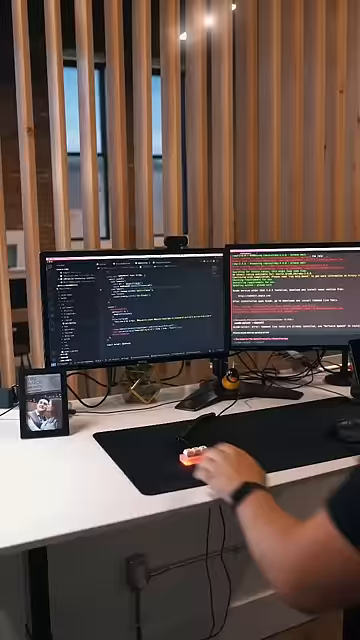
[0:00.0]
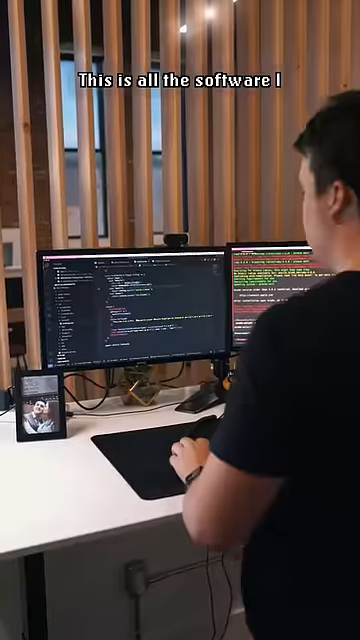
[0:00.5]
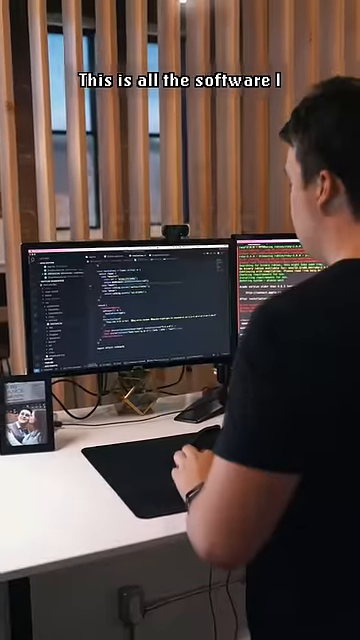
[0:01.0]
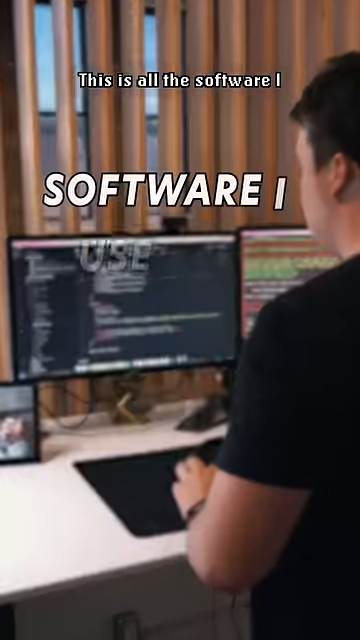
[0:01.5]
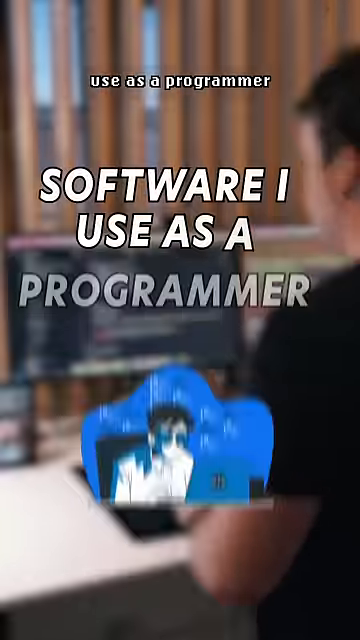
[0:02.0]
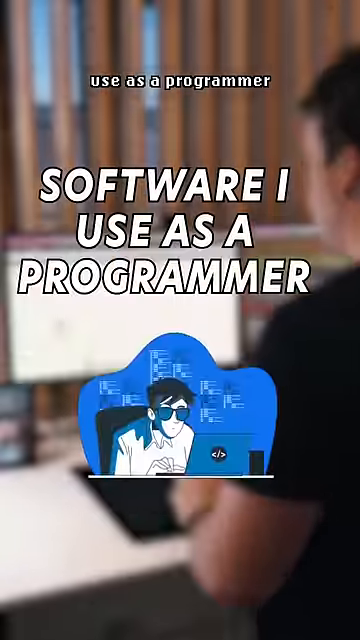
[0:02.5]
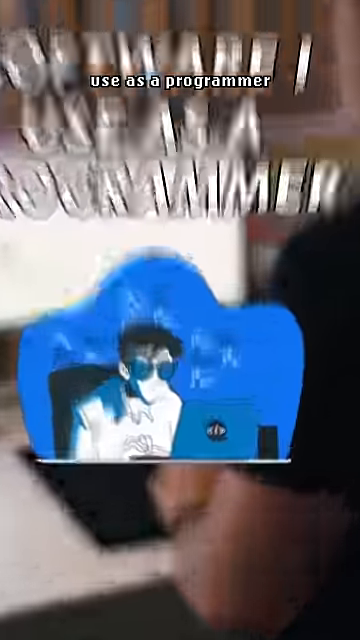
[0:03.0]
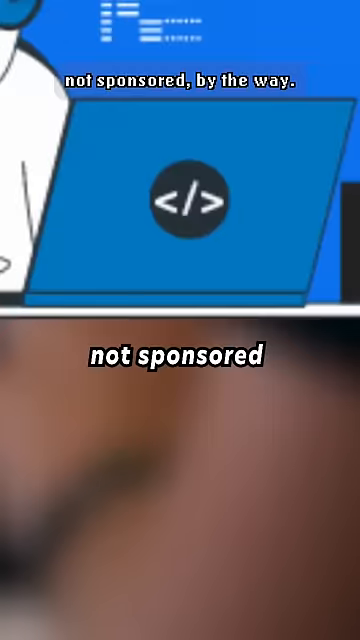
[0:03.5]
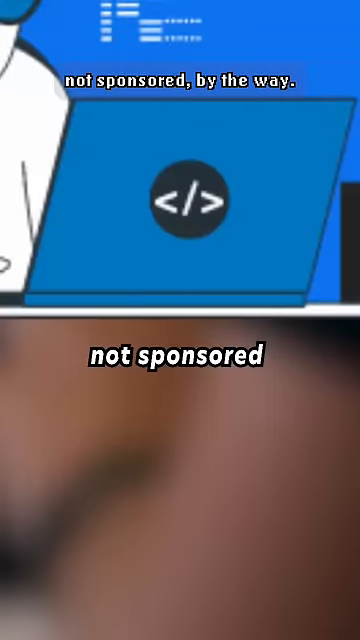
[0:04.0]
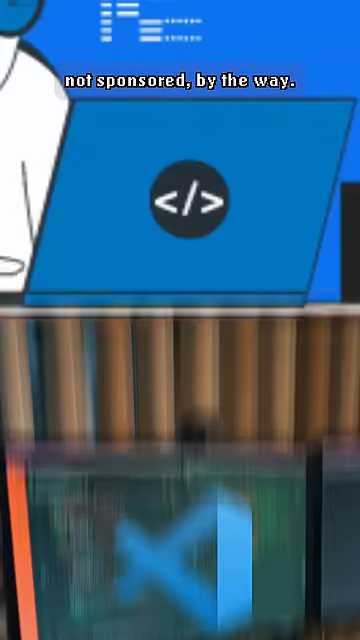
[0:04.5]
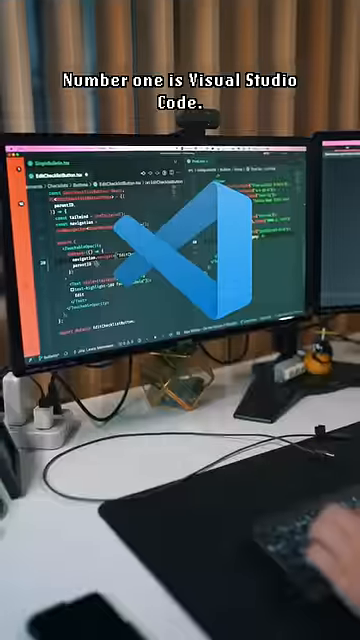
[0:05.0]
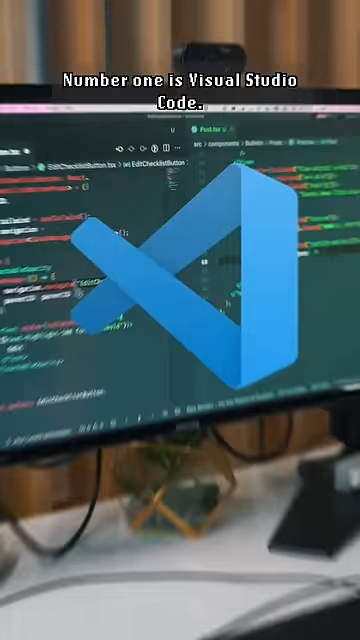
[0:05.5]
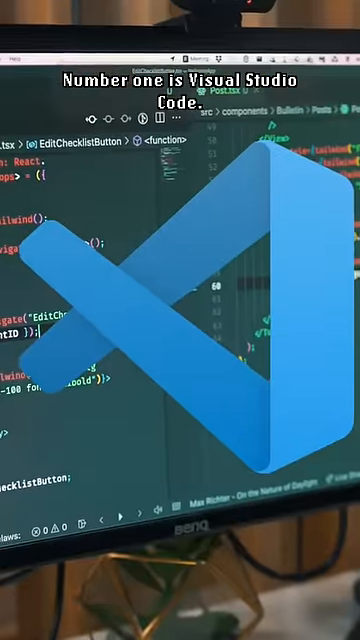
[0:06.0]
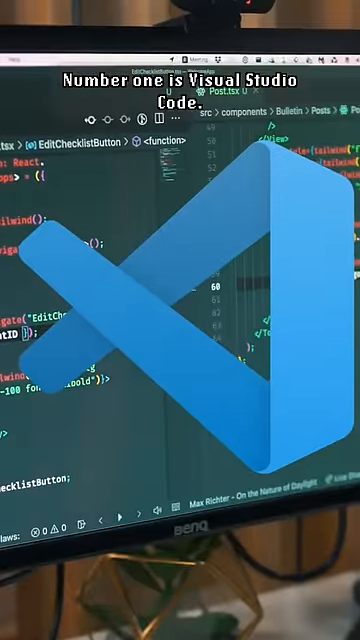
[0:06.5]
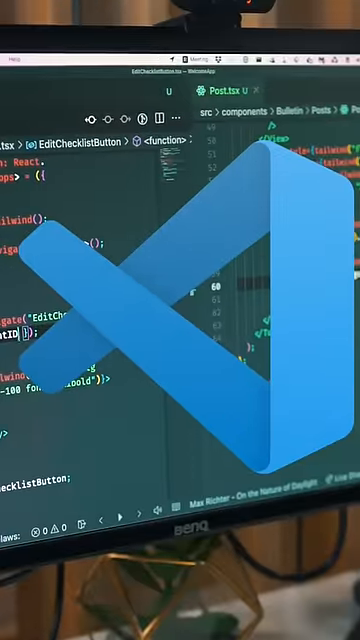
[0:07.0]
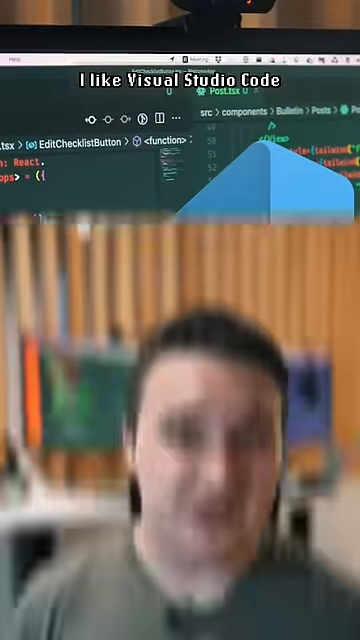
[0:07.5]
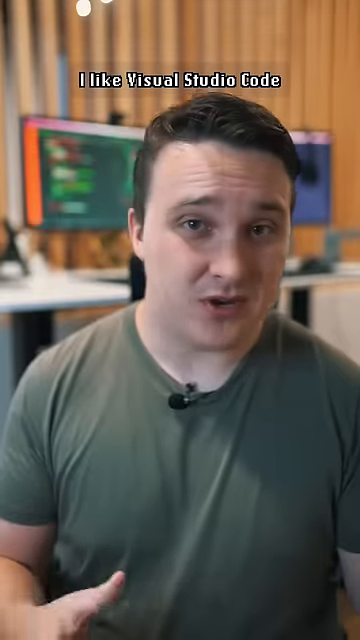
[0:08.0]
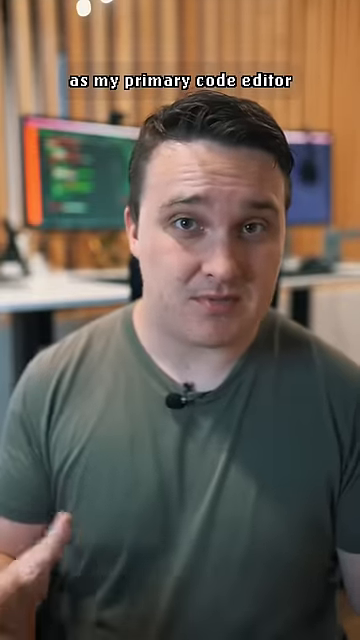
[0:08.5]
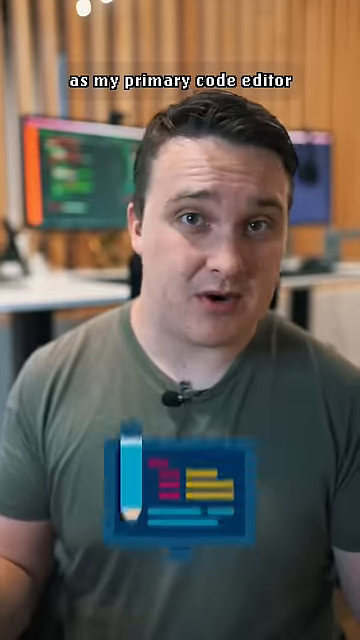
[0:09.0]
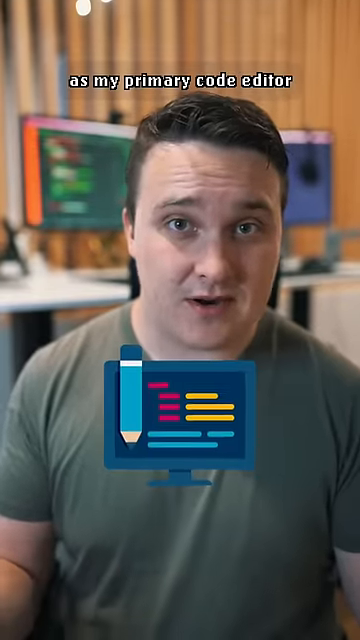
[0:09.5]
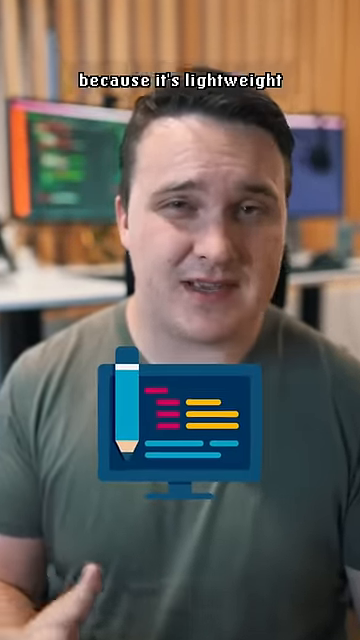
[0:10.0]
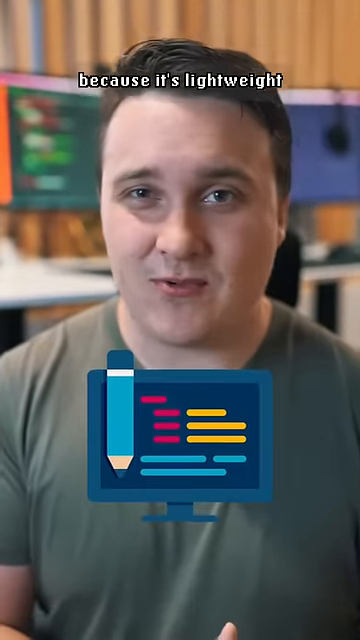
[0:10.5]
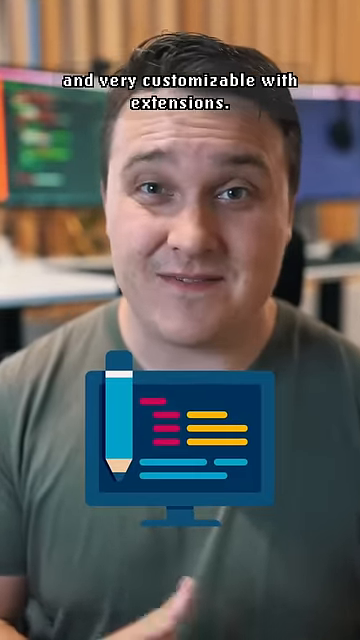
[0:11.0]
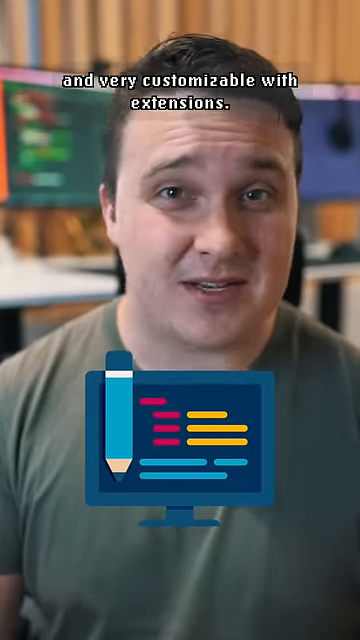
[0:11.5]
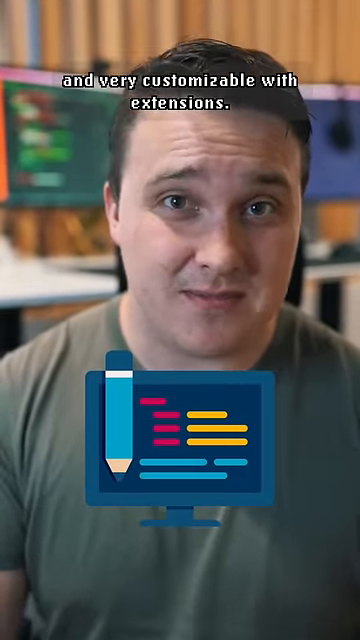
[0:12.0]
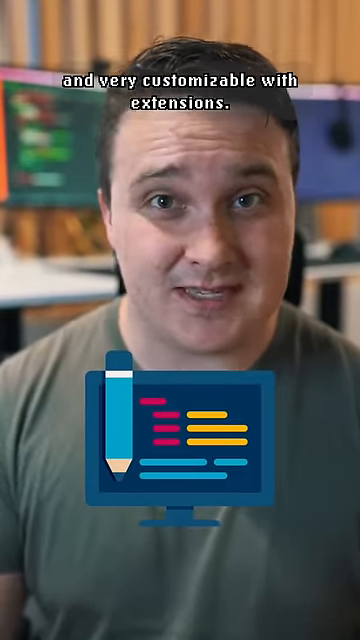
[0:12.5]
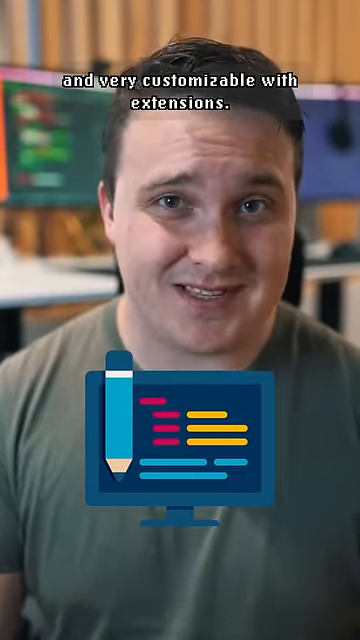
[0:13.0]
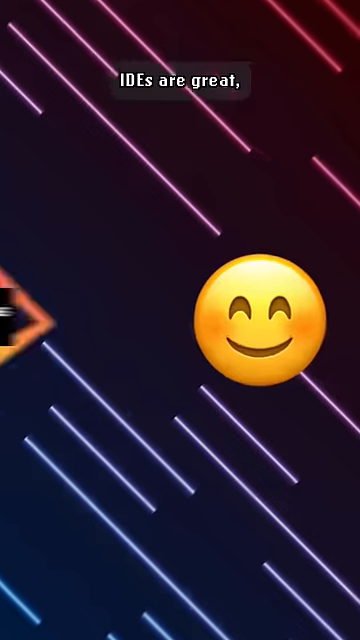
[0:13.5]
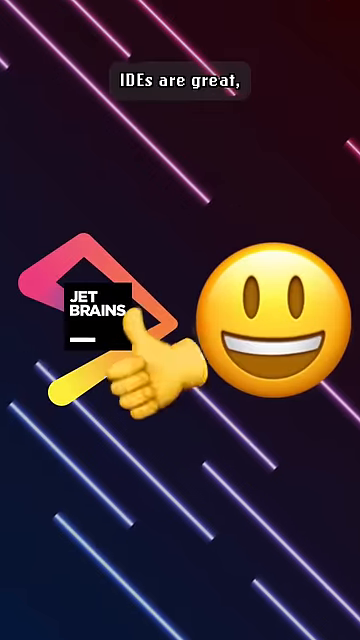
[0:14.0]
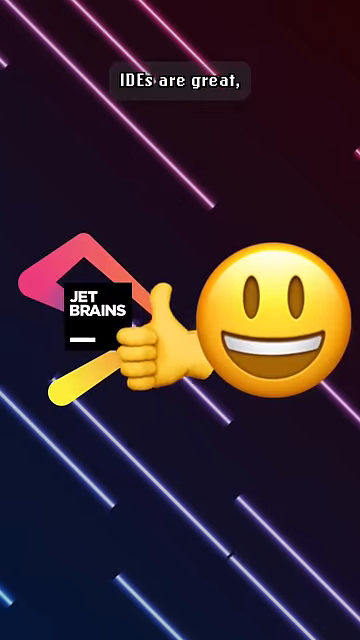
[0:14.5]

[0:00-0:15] A person is shown with his laptops and tablets. The thumbnail is about software he uses for programming languages and doing programming.